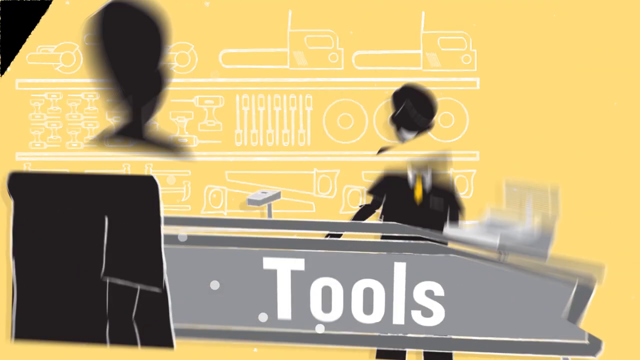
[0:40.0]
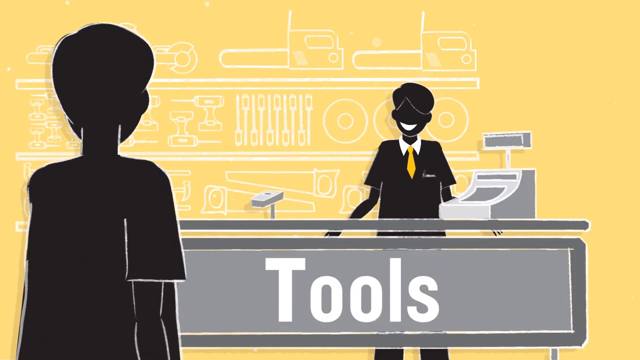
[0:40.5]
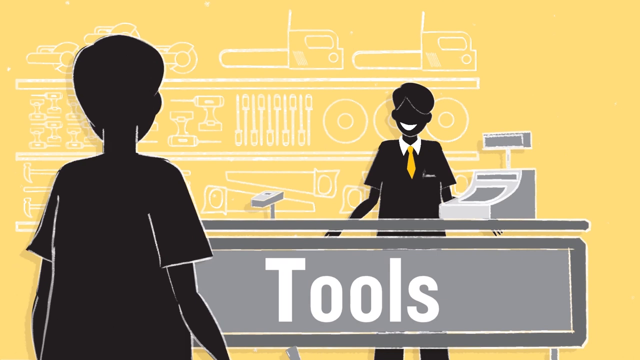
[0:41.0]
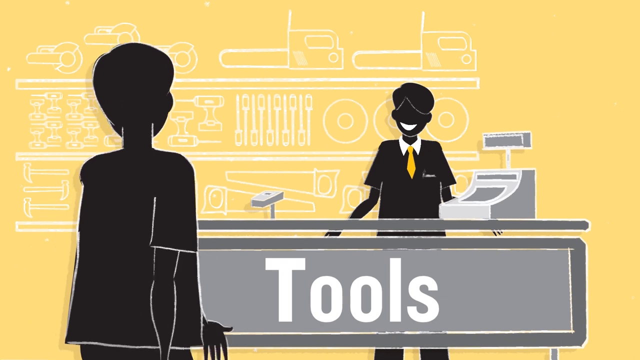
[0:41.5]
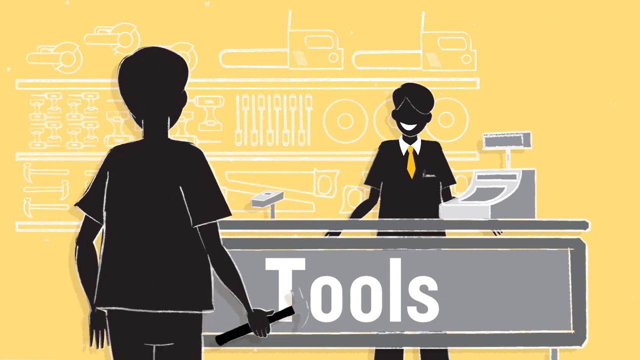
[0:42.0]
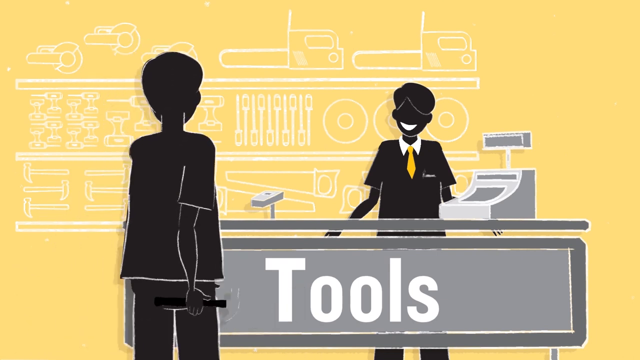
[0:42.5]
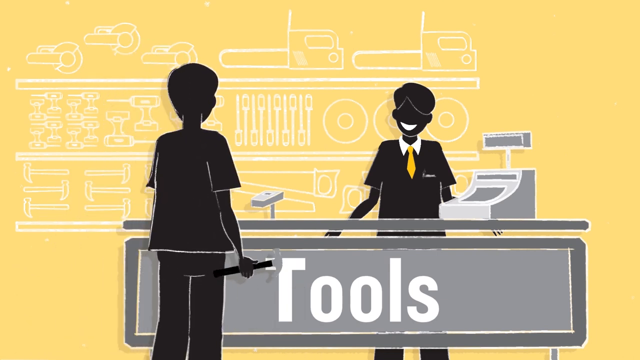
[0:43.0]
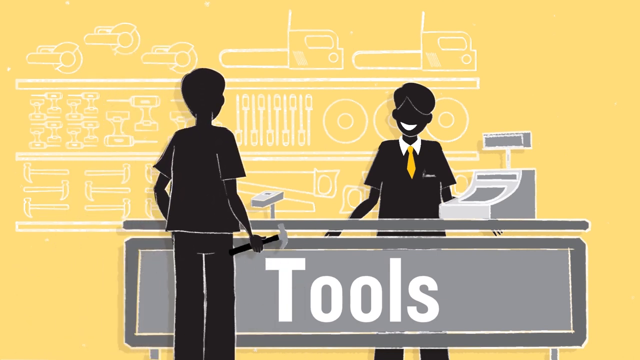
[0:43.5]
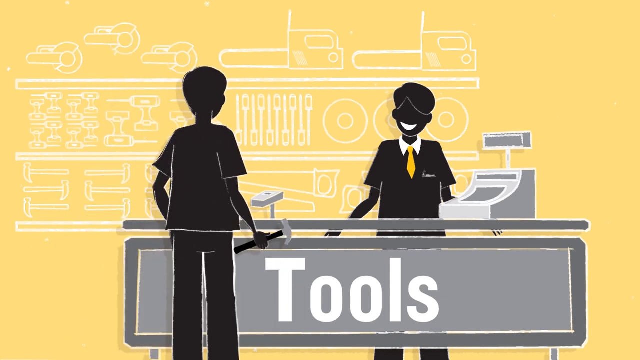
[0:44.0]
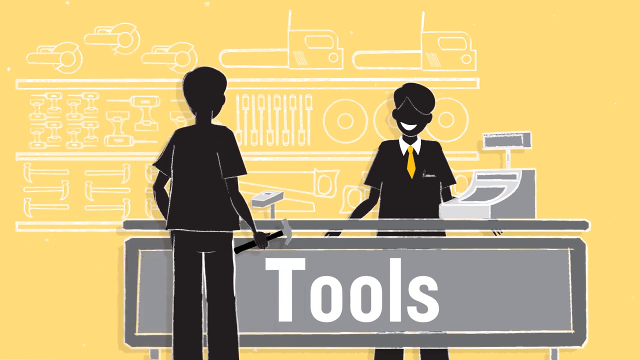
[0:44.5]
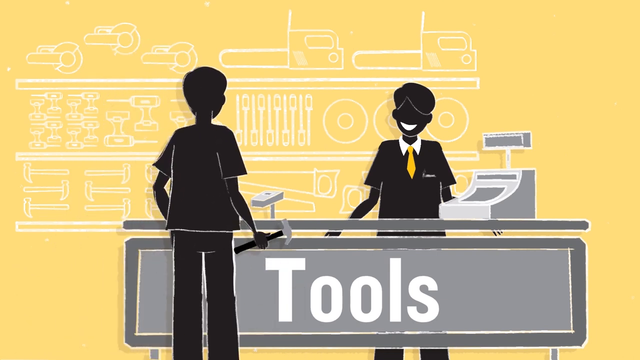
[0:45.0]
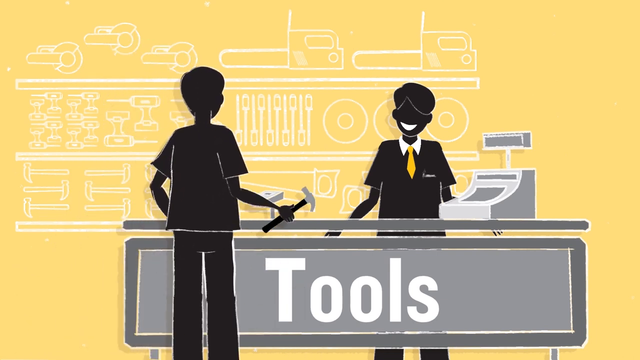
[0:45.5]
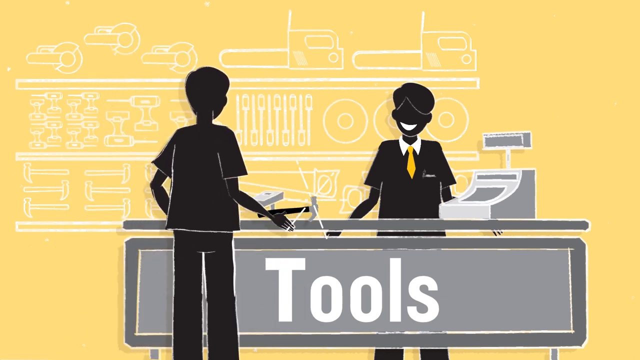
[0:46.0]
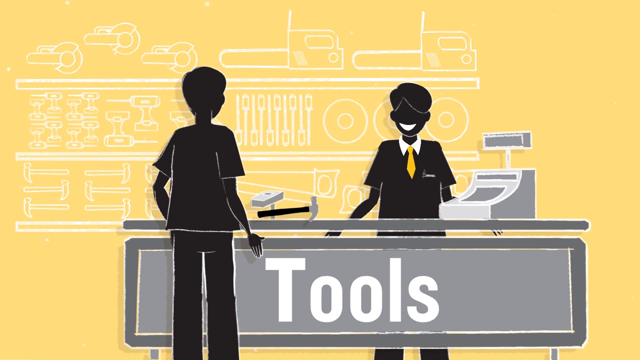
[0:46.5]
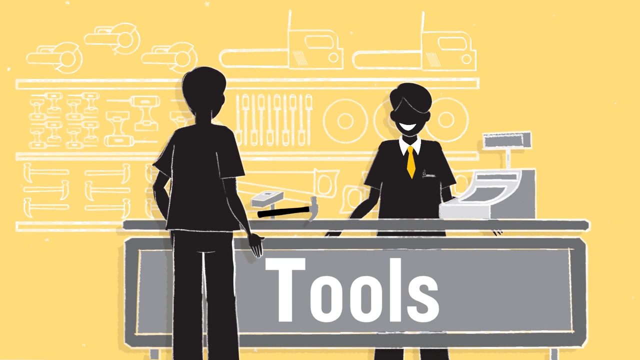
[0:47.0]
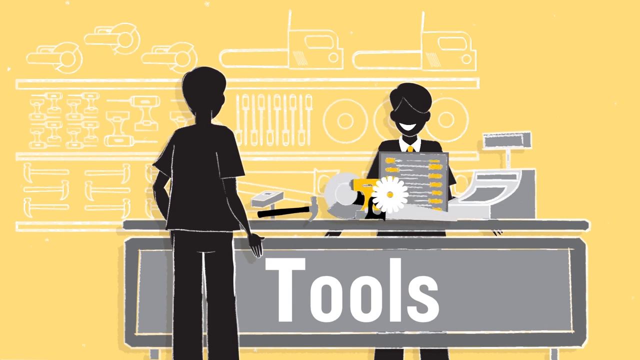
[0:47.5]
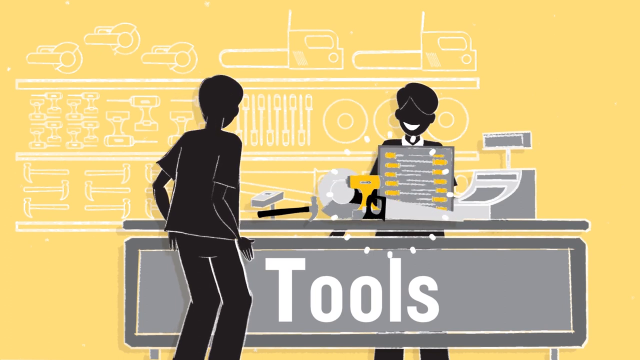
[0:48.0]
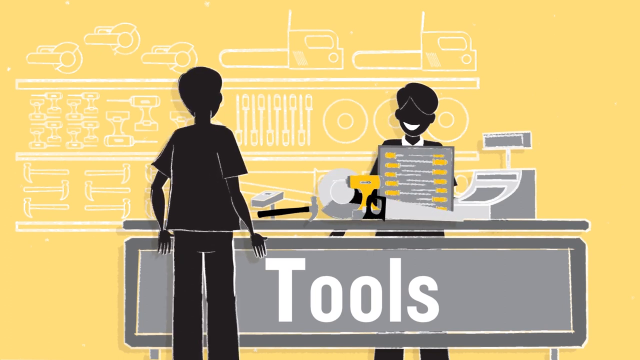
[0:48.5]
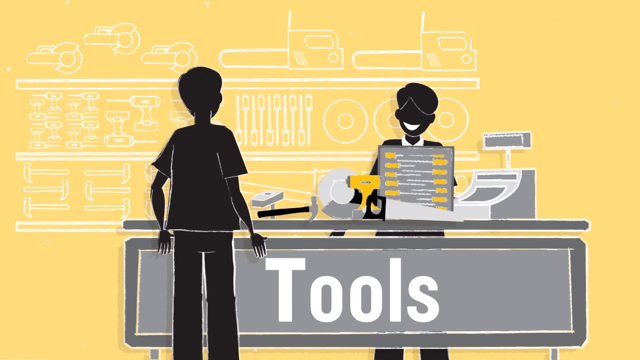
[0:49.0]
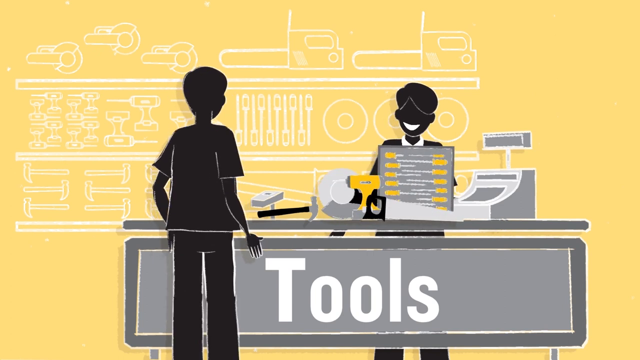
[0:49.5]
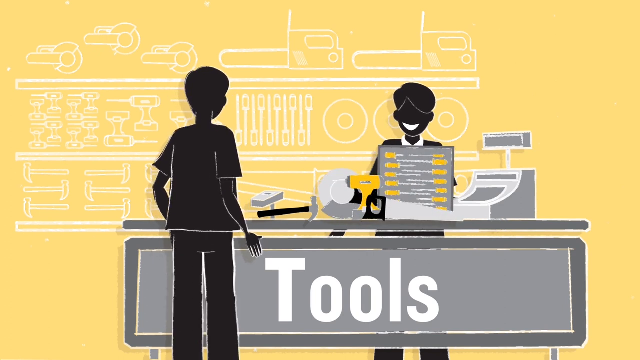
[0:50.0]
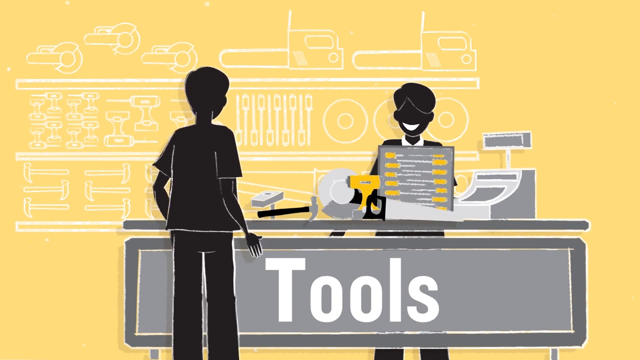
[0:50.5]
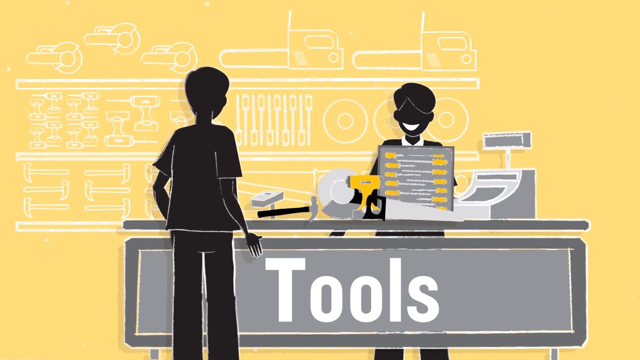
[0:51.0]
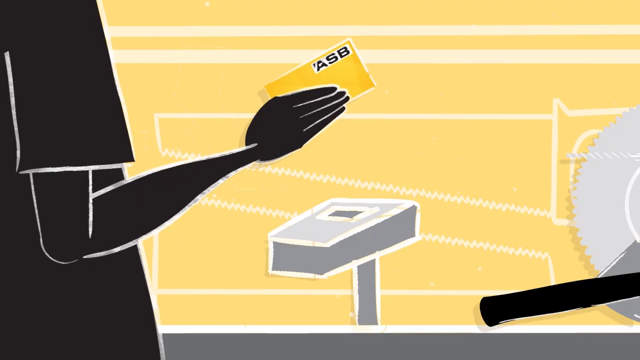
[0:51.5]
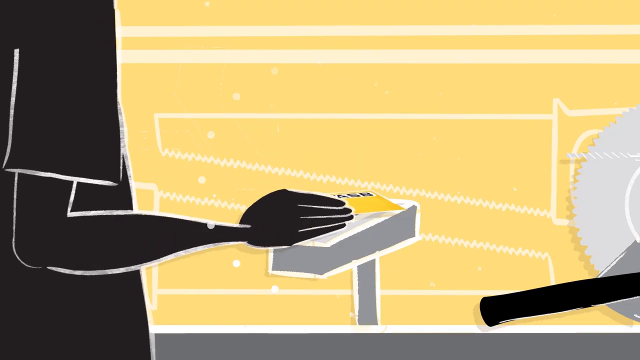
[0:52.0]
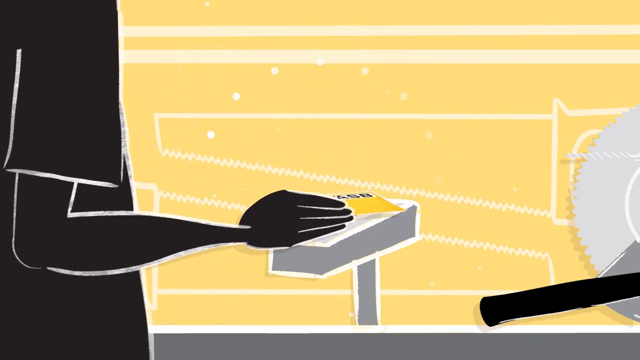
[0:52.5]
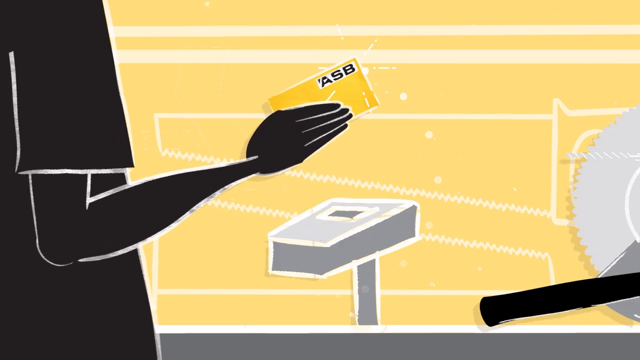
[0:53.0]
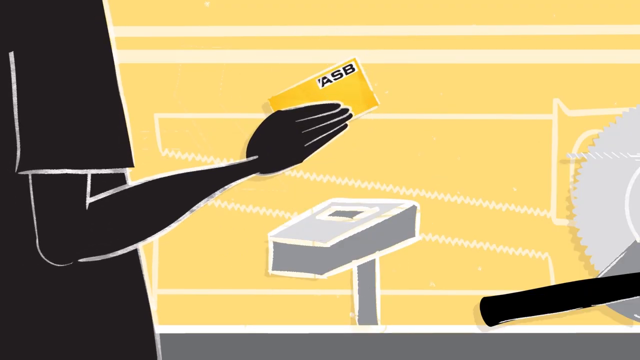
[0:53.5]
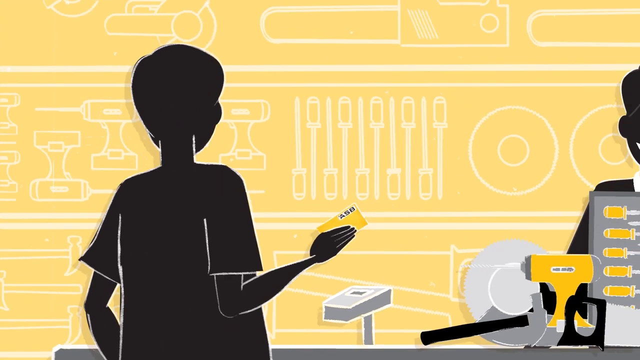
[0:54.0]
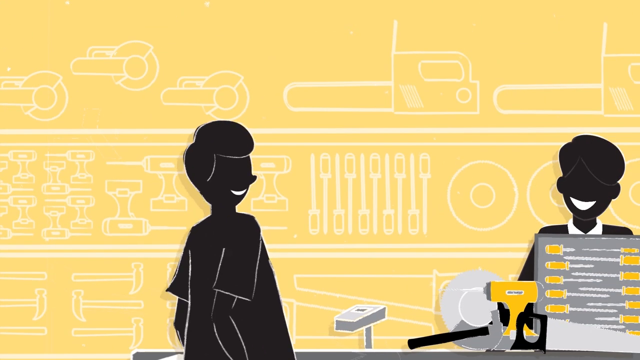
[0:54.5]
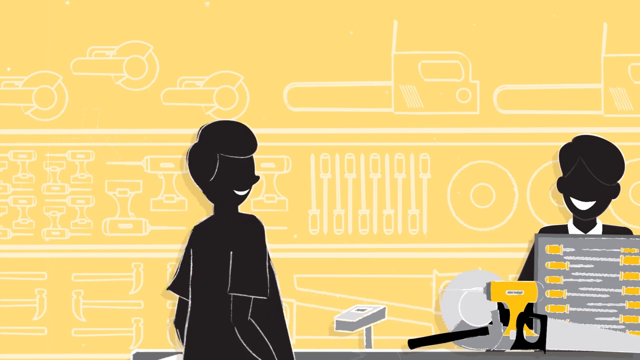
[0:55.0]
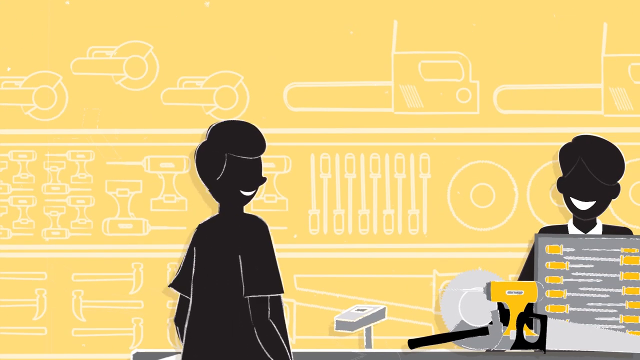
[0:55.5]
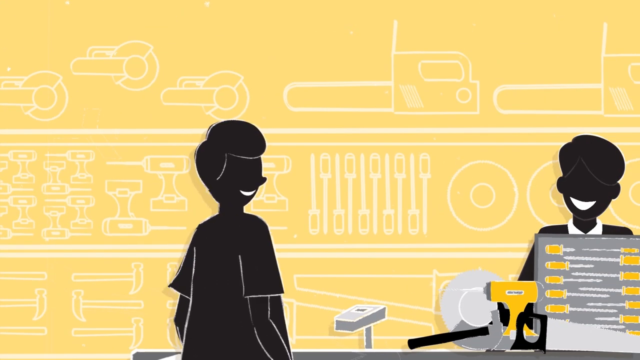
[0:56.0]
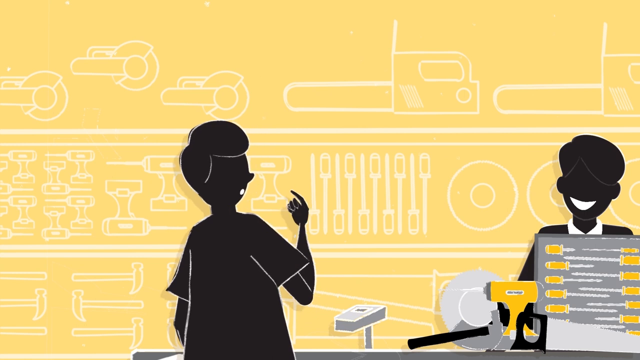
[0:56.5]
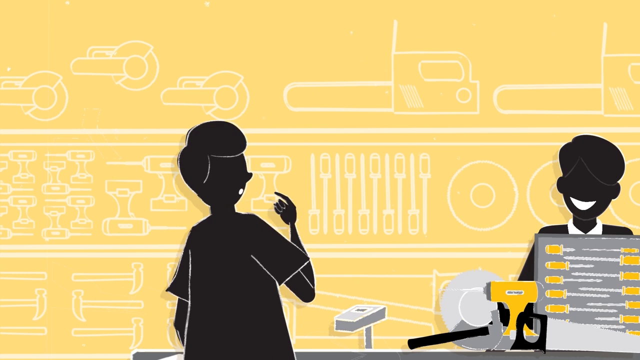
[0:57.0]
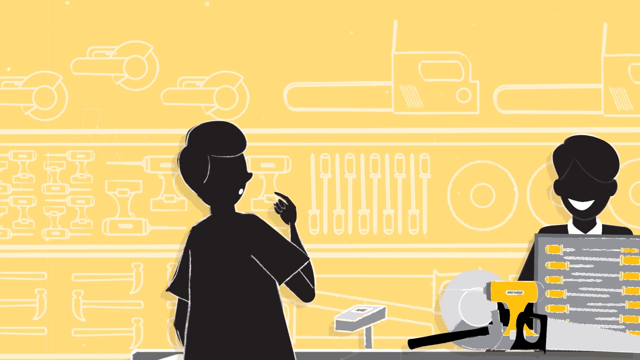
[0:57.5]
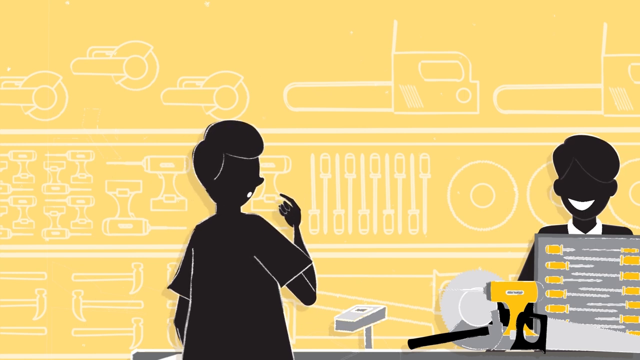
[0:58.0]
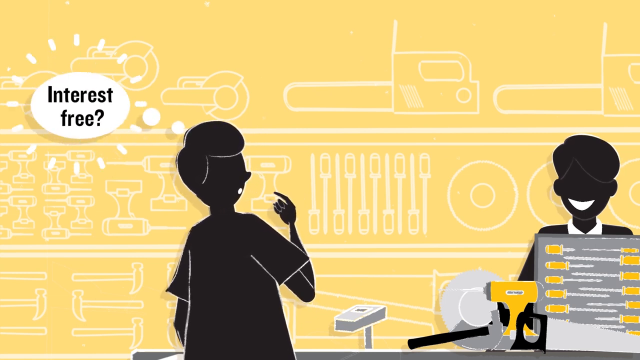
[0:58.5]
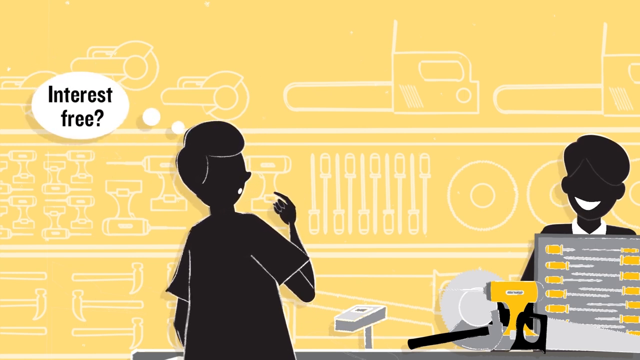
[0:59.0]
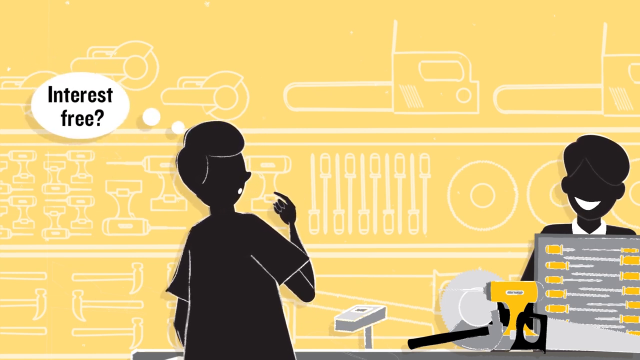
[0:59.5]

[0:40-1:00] A man stands behind a desk with tools, a desktop and some machines around. An ATM card is swiped on a machine before it grants access.